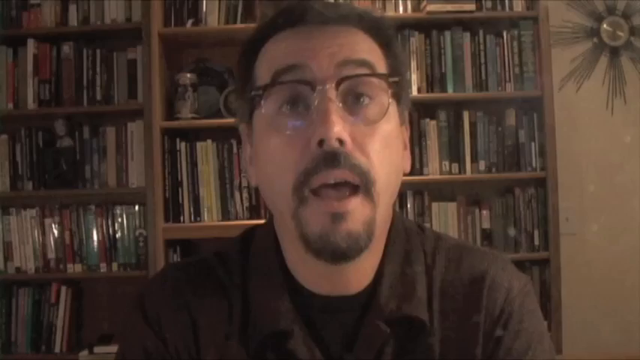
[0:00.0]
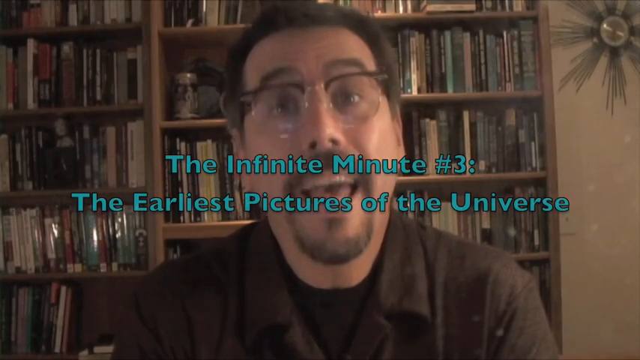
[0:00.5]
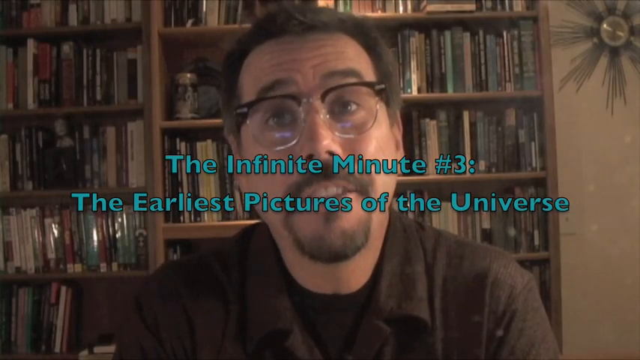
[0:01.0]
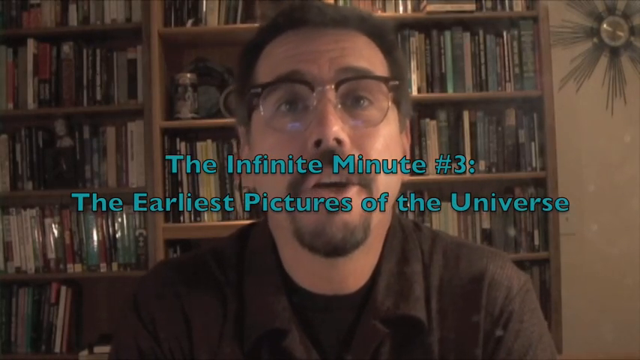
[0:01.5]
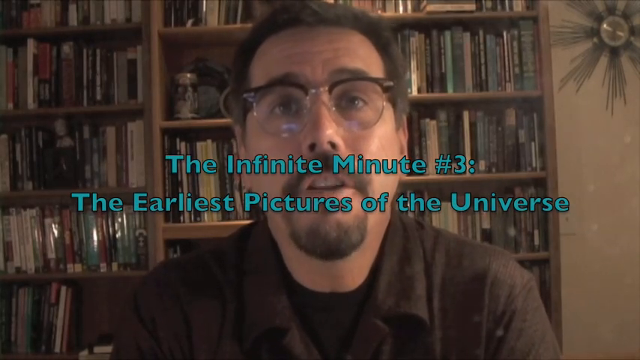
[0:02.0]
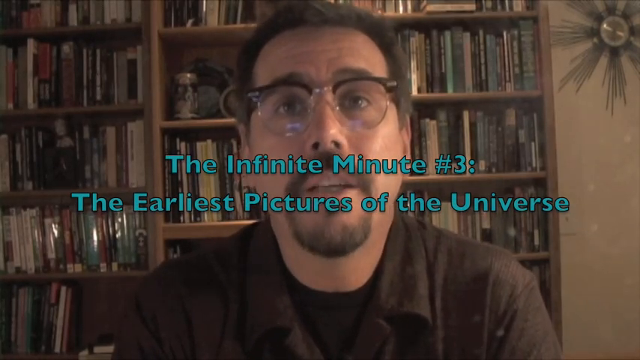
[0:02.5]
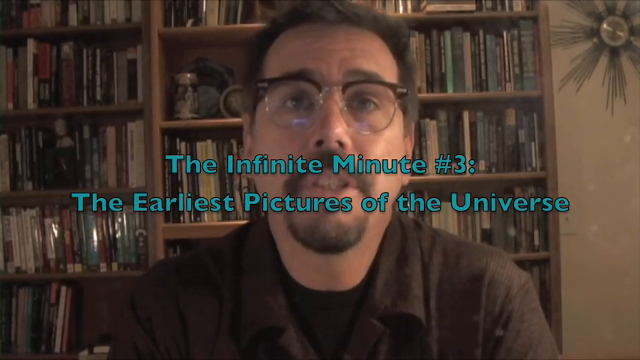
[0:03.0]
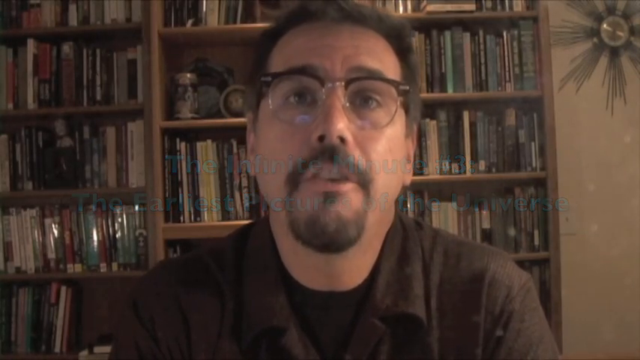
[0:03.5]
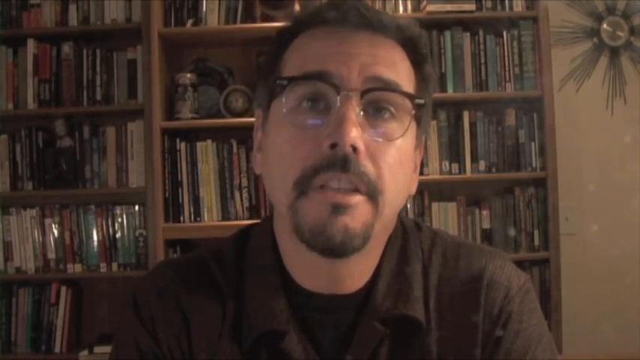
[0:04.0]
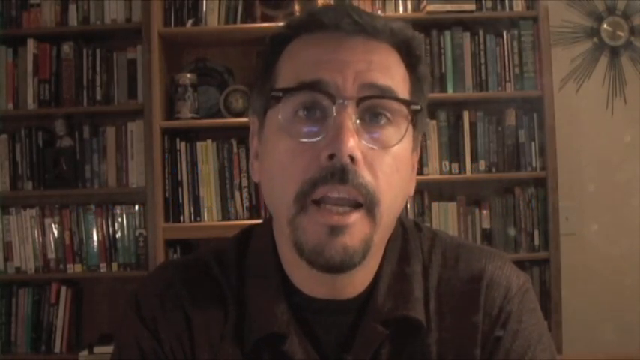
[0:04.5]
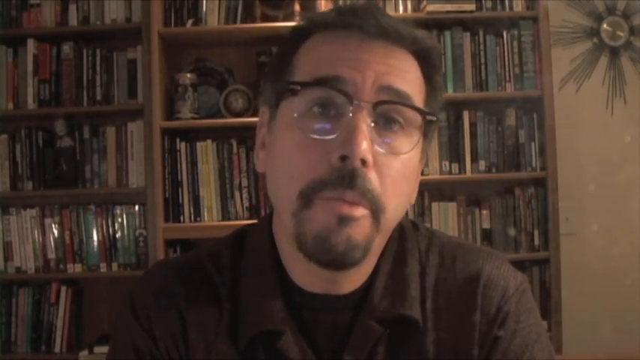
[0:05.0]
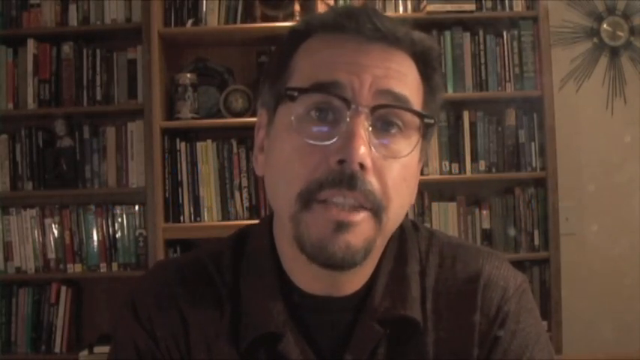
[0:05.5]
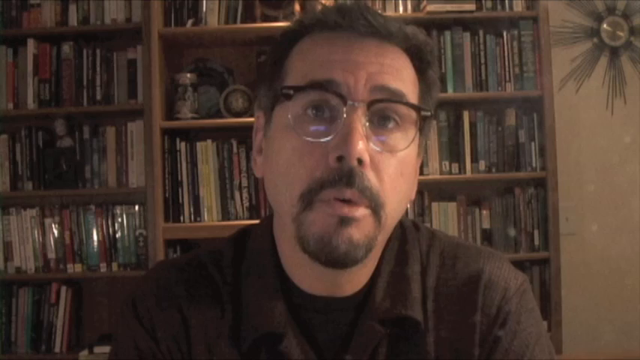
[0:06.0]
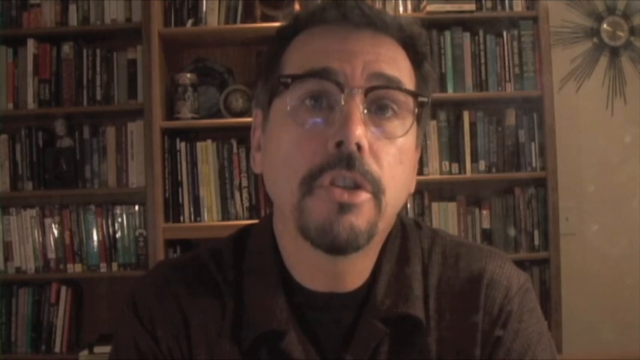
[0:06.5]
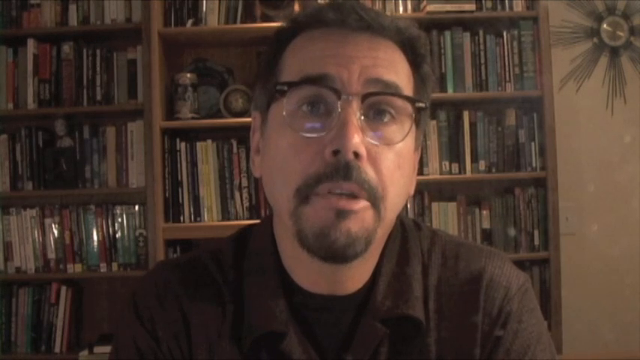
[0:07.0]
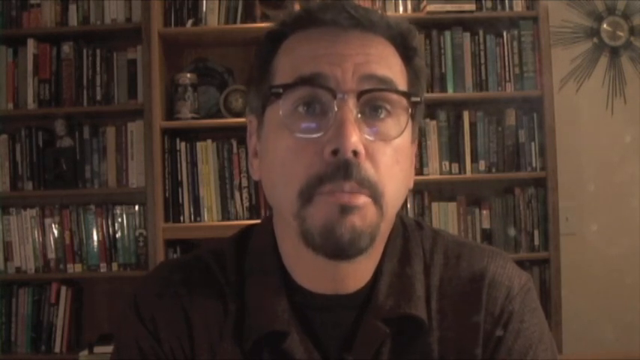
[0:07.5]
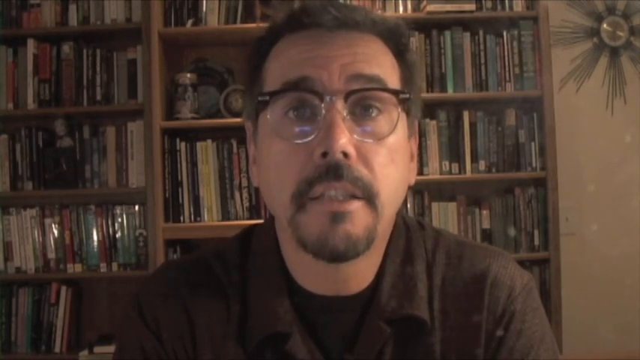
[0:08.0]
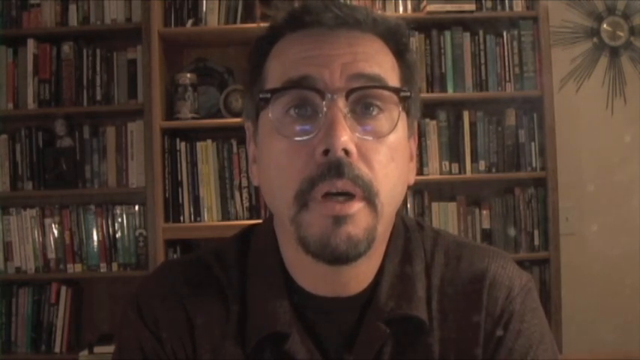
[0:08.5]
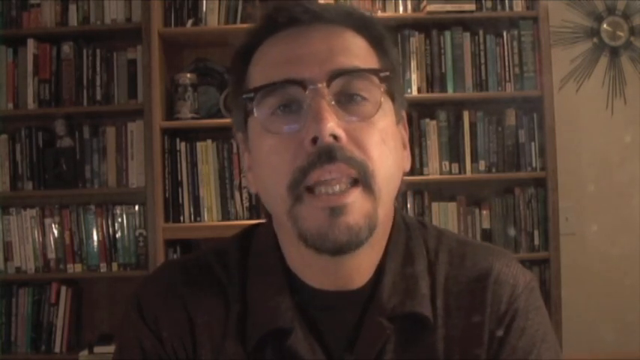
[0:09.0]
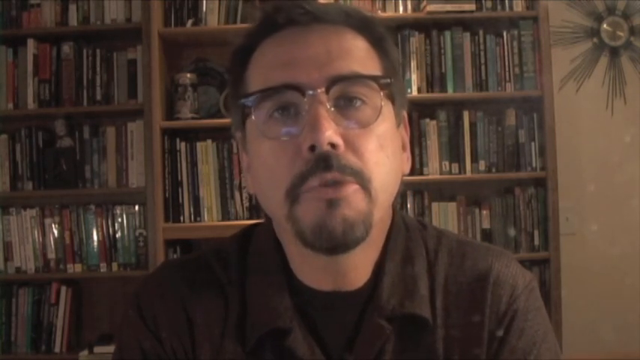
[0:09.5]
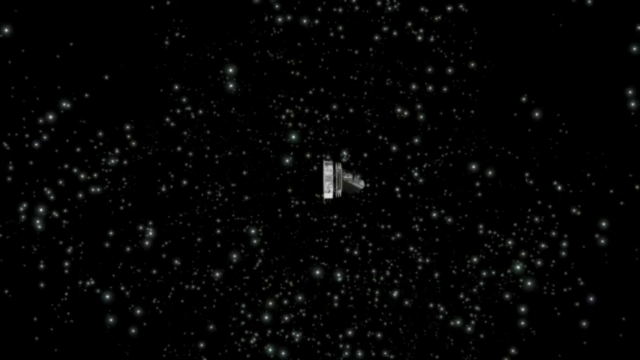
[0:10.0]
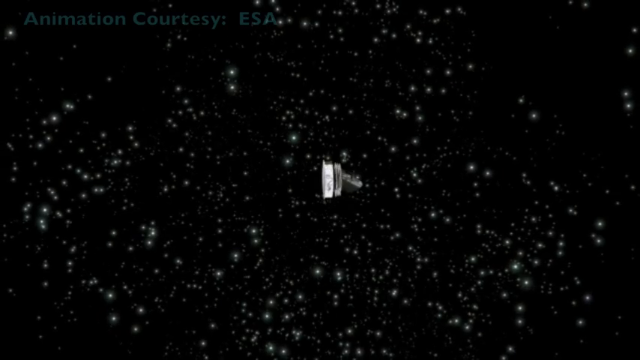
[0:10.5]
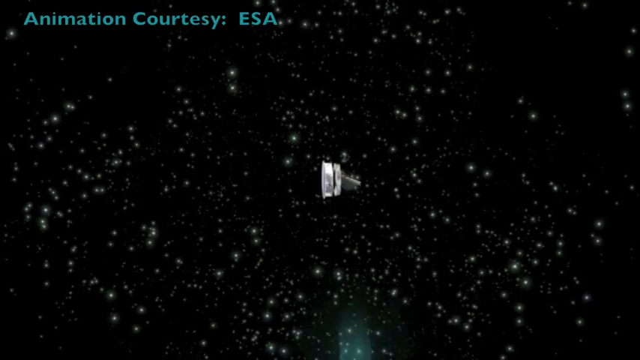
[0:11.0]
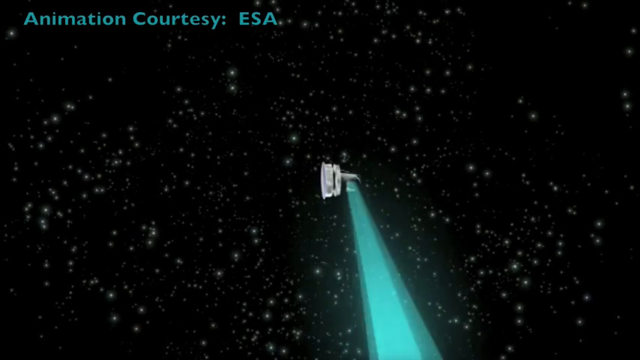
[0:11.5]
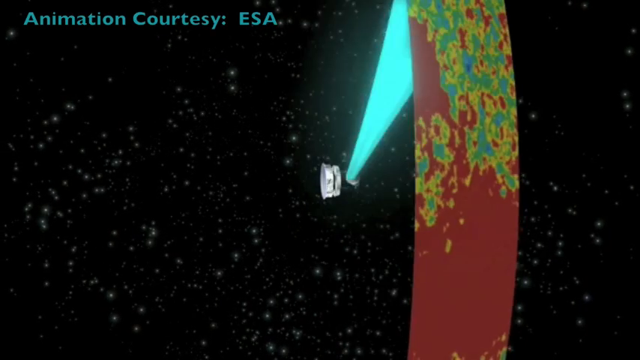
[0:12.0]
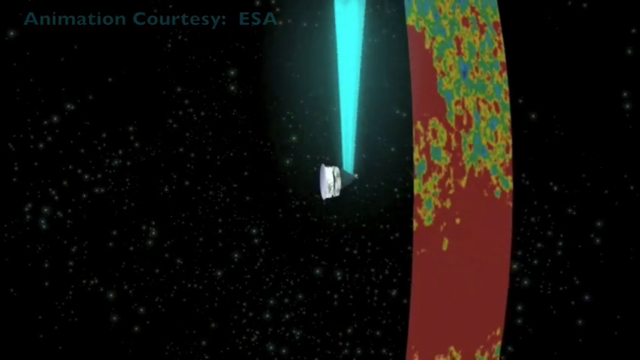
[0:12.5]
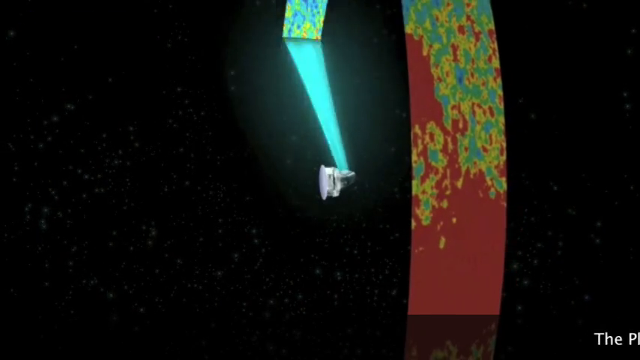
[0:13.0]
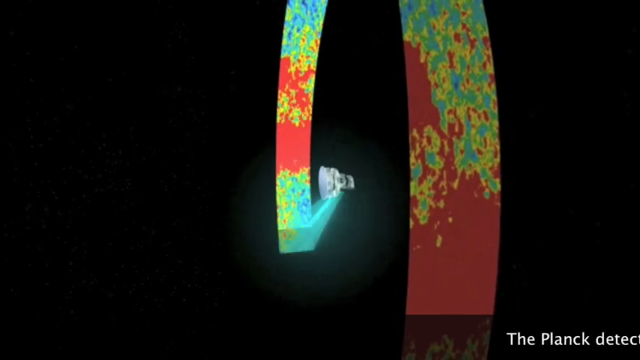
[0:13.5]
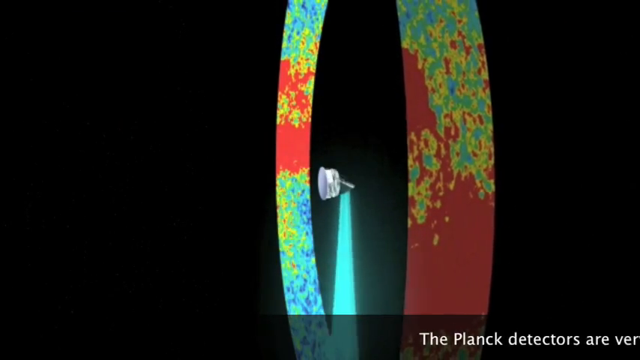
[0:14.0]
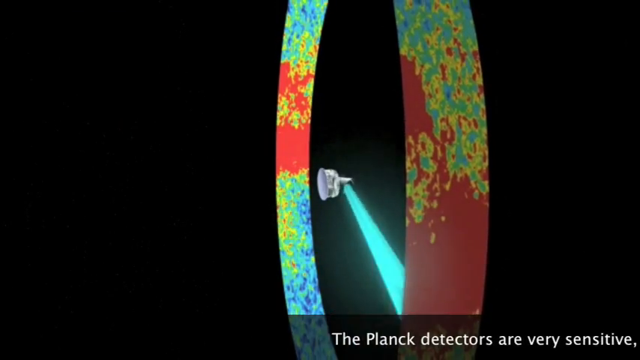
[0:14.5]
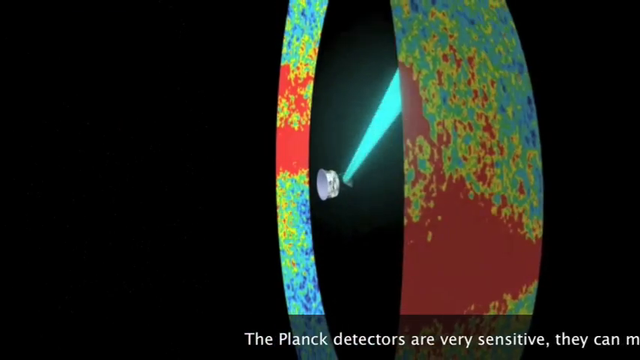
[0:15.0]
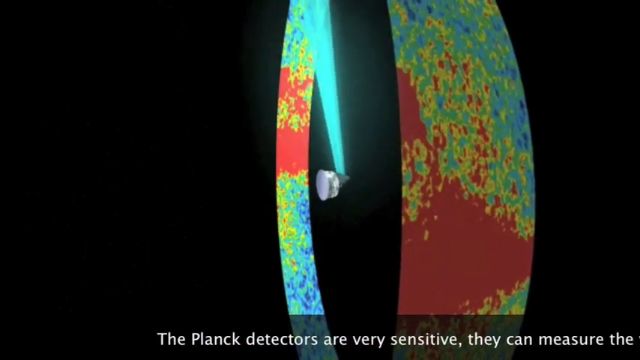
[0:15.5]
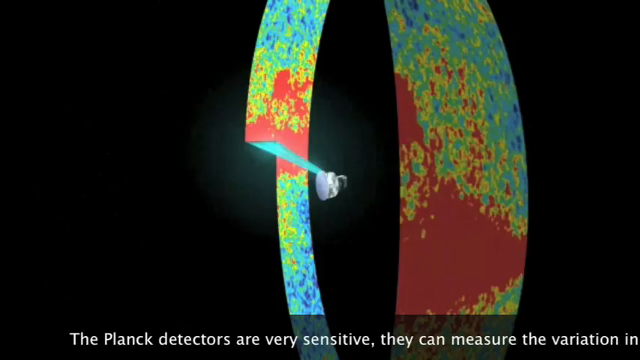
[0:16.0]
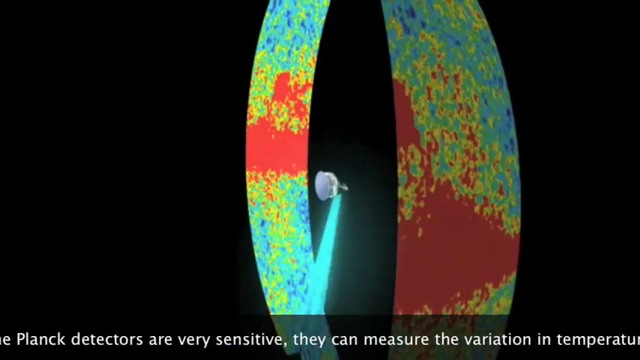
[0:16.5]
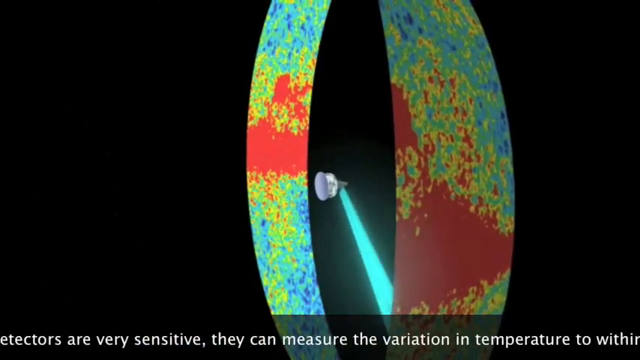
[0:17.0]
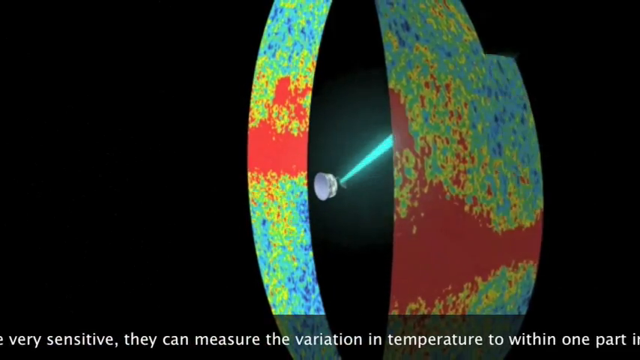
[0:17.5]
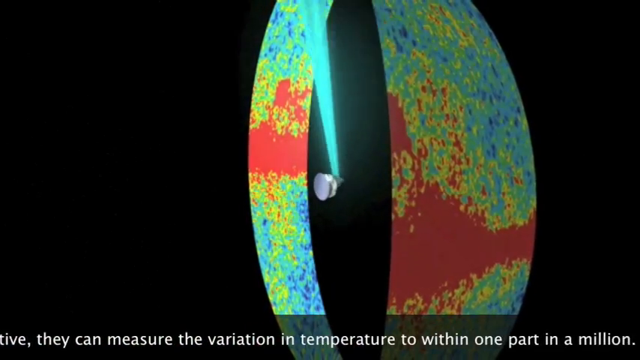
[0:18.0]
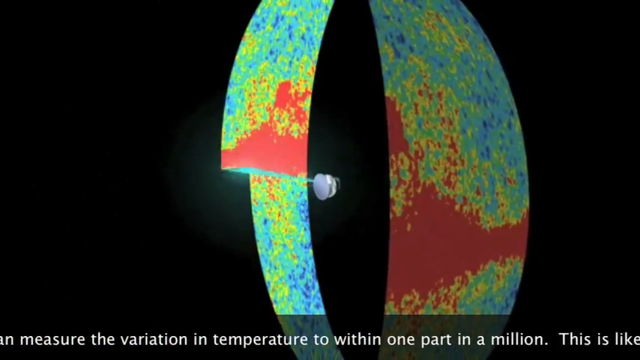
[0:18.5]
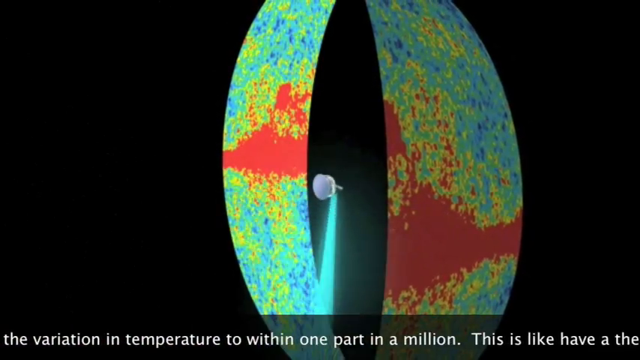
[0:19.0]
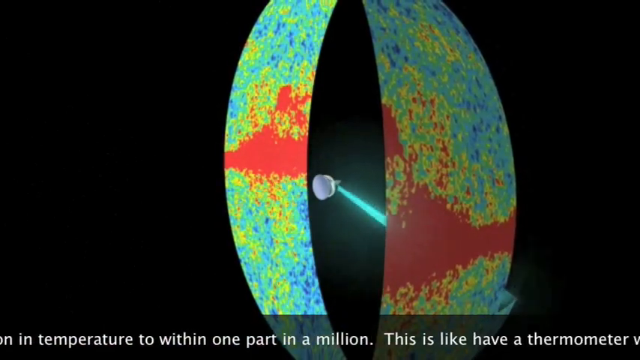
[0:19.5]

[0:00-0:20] A man is speaking in front of a bookshelf with many books on it. He wears a brown collared shirt and horn-rimmed glasses, and has a goatee and dark hair. On-screen text reads "the infinite minute number three, the earliest pictures of the universe." Next comes an animation of what looks to be space, with some kind of device spinning in a circle. As it spins, it adds kind of multi-colored layers around itself; the layers are kind of speckled and are blue, green and red. The layers form kind of a ring or tubular shape, all stemming from the animated device in the middle, which shoots a beam of light to form the shape.